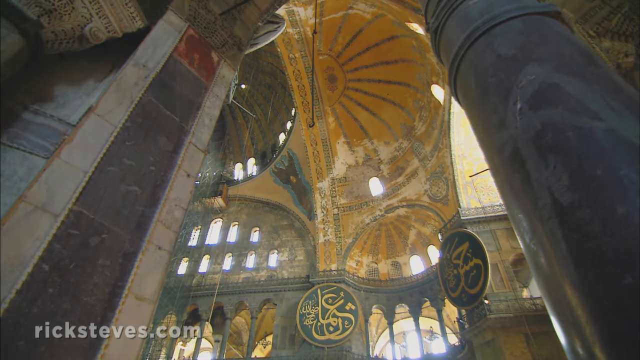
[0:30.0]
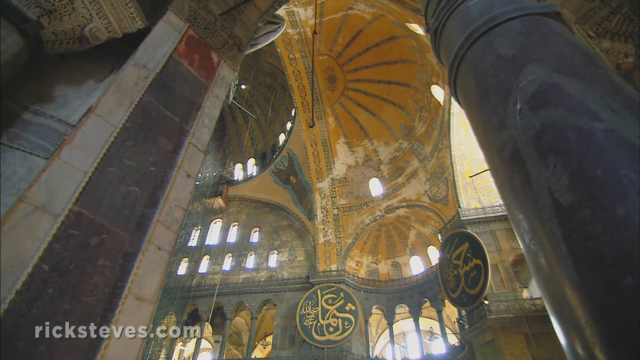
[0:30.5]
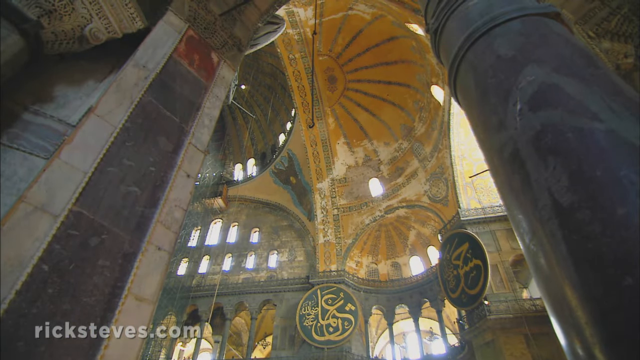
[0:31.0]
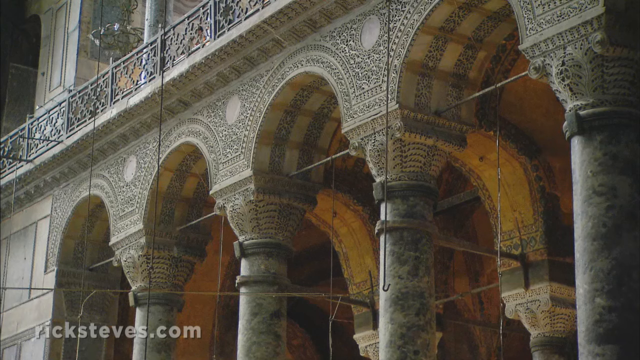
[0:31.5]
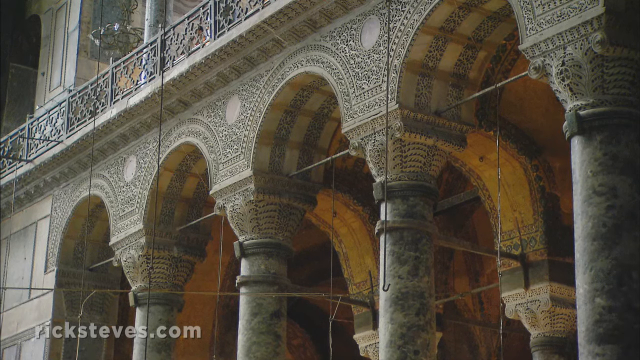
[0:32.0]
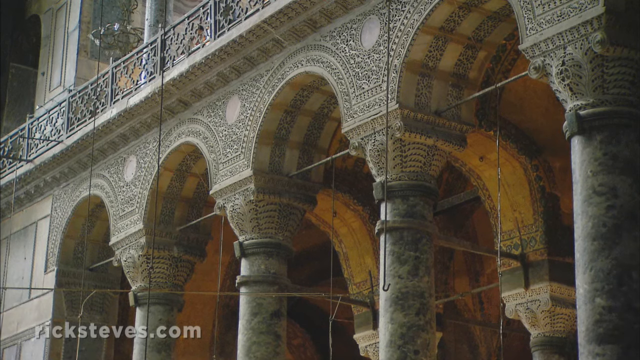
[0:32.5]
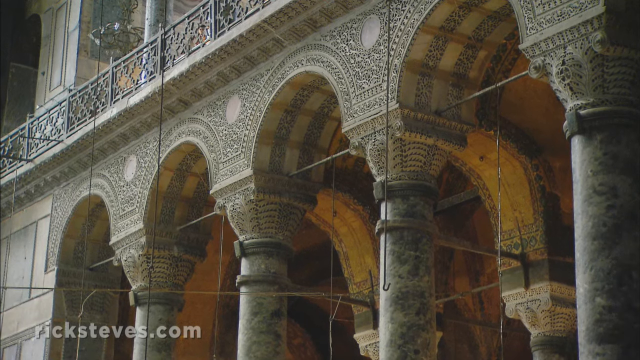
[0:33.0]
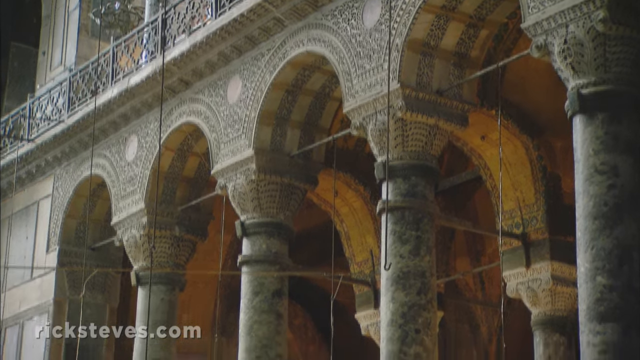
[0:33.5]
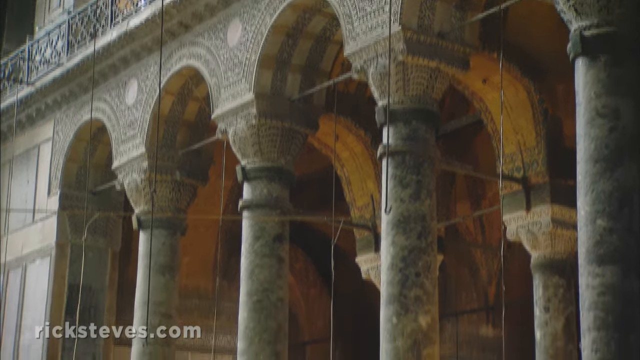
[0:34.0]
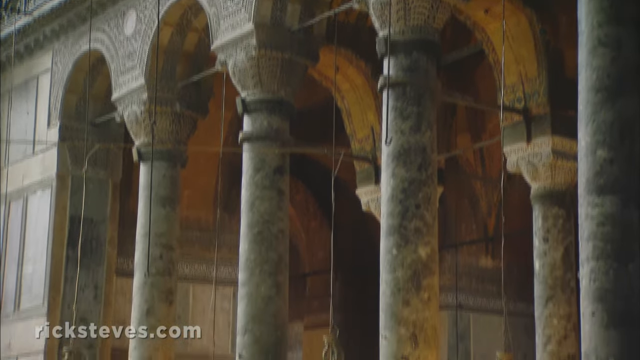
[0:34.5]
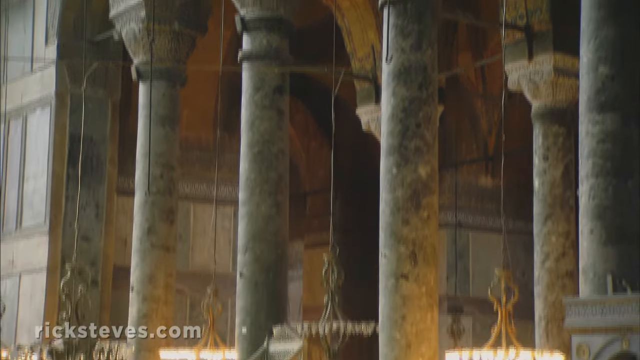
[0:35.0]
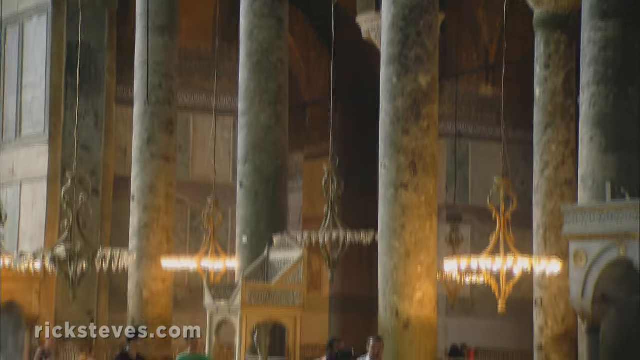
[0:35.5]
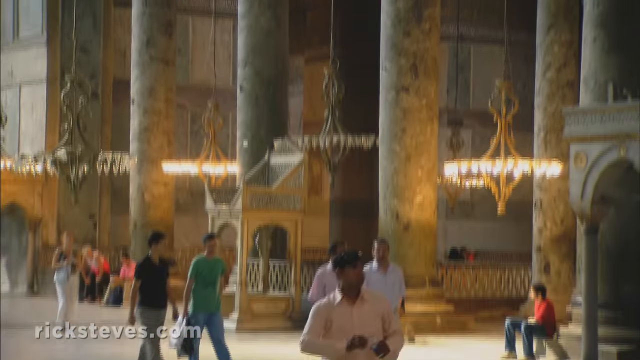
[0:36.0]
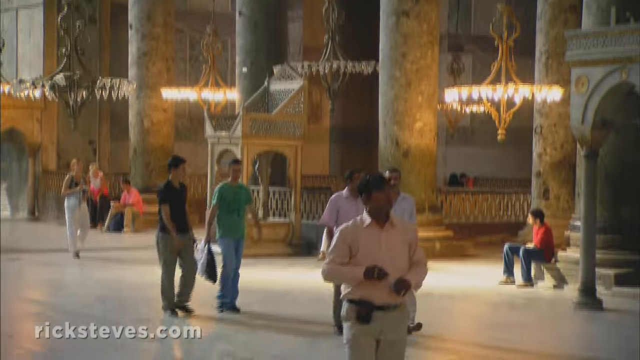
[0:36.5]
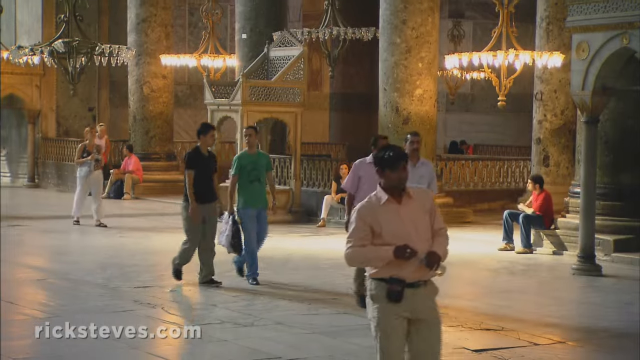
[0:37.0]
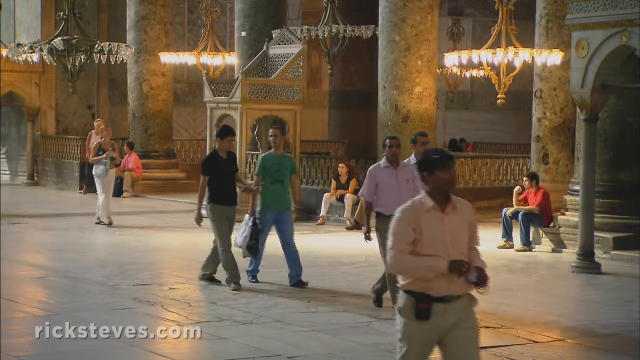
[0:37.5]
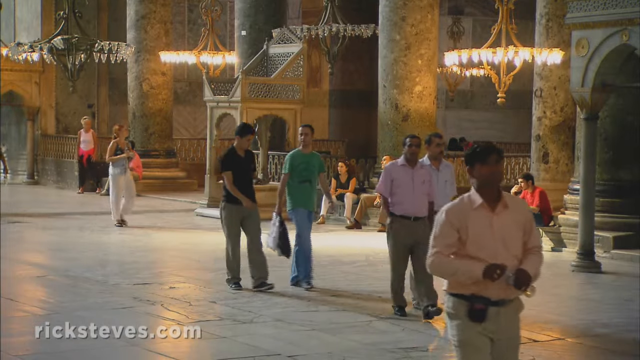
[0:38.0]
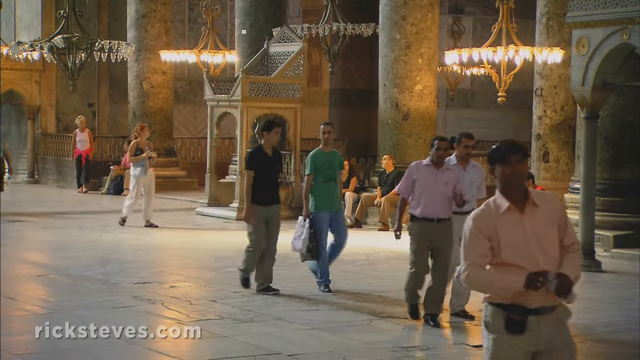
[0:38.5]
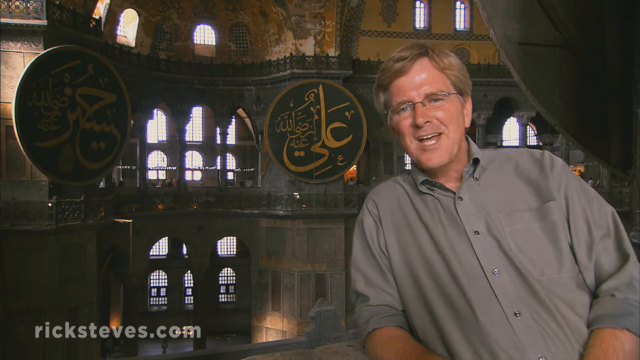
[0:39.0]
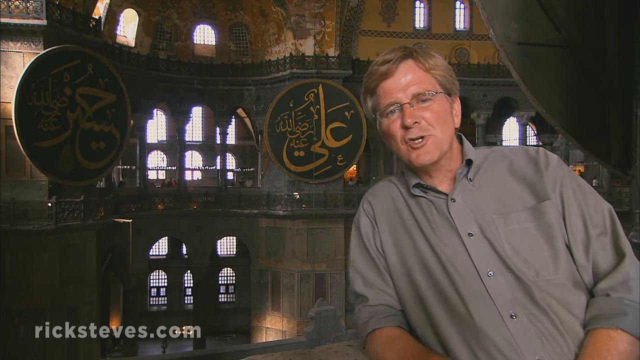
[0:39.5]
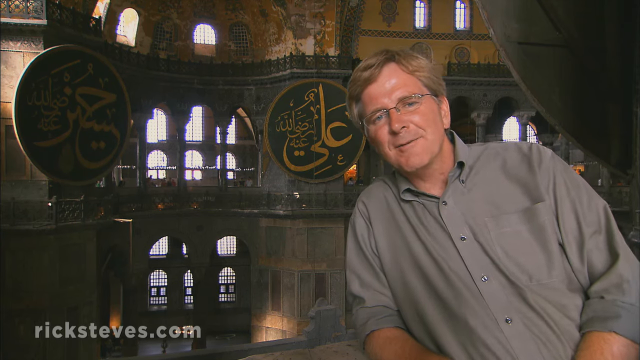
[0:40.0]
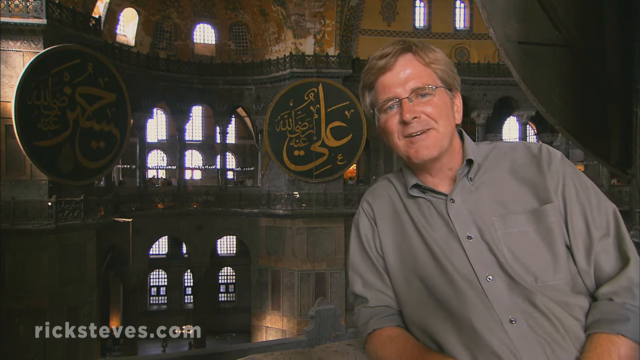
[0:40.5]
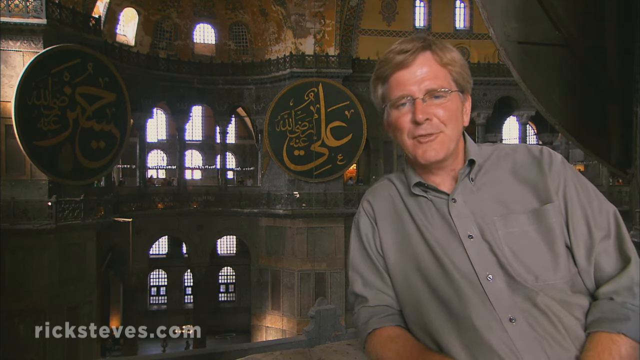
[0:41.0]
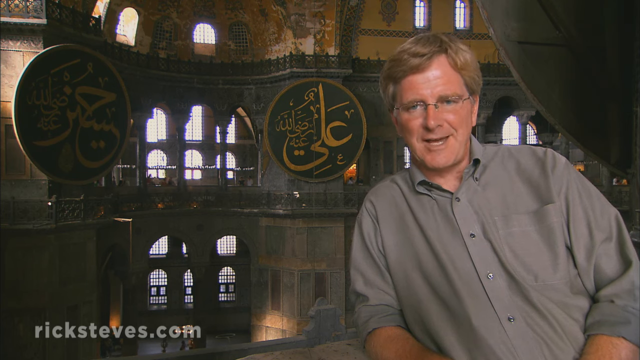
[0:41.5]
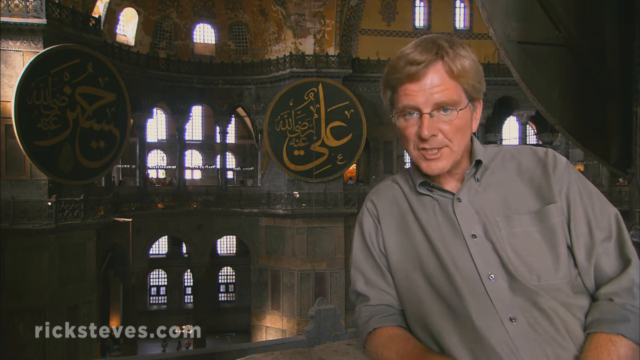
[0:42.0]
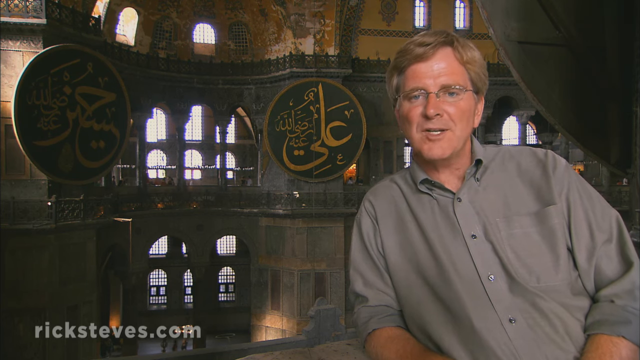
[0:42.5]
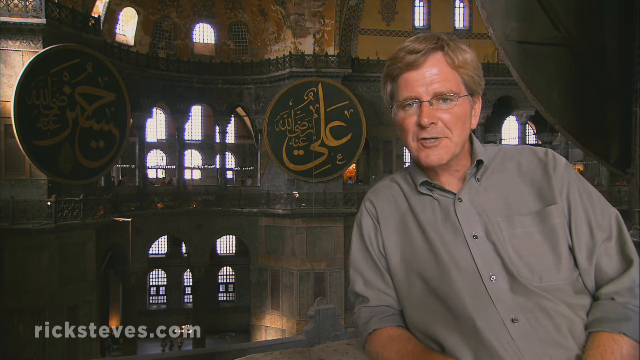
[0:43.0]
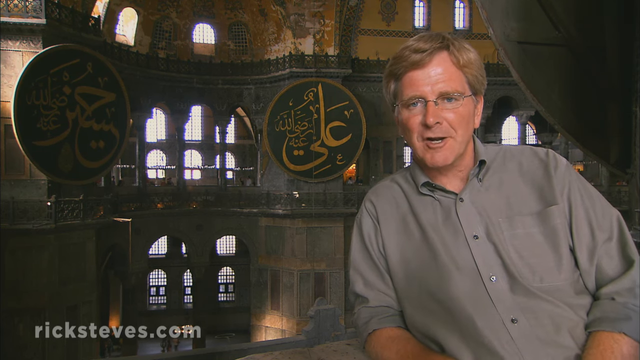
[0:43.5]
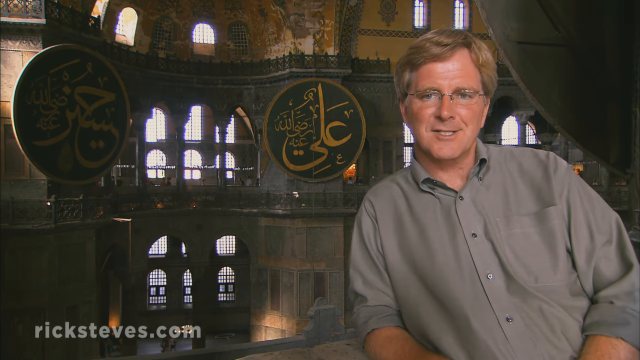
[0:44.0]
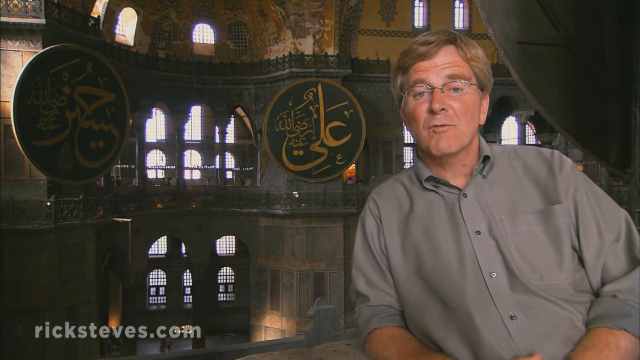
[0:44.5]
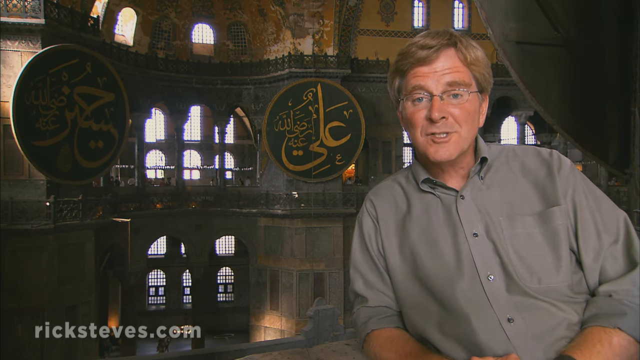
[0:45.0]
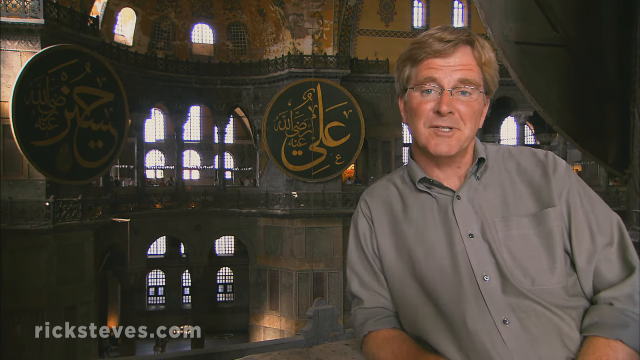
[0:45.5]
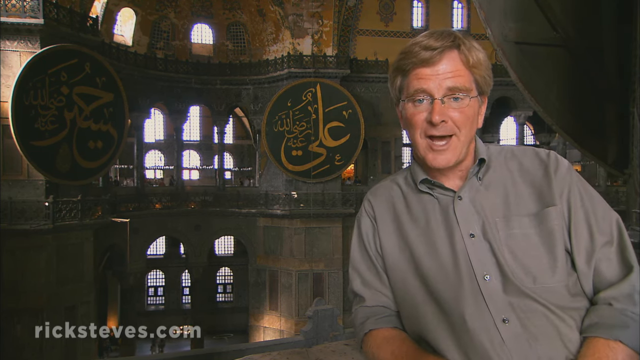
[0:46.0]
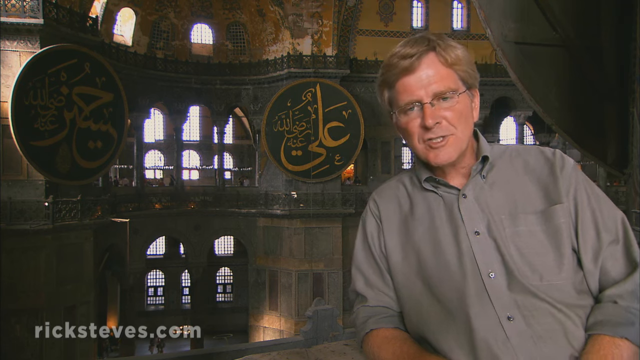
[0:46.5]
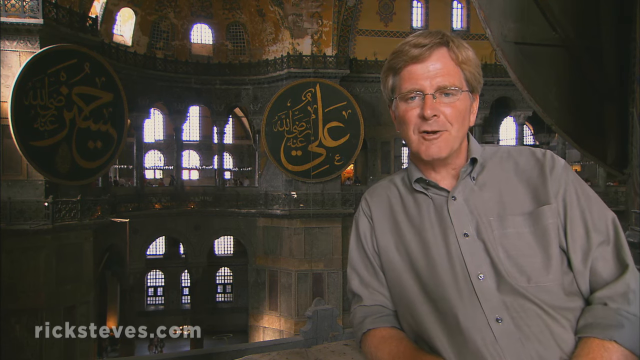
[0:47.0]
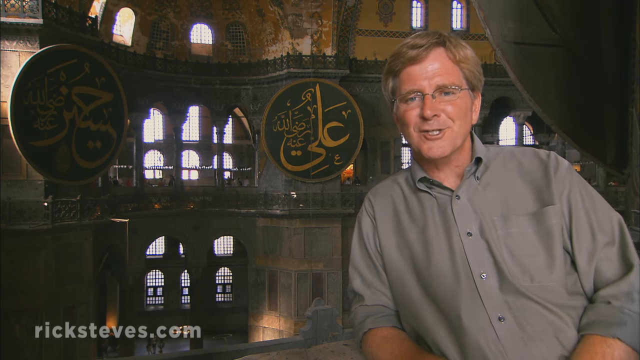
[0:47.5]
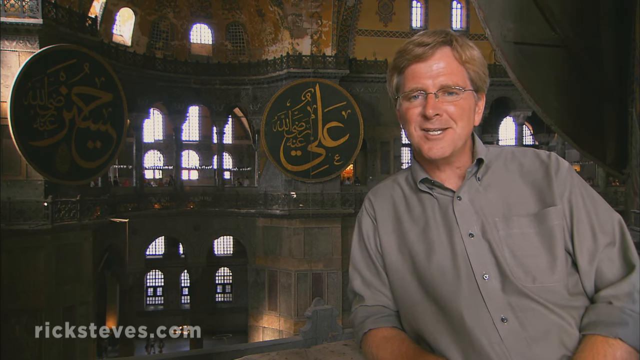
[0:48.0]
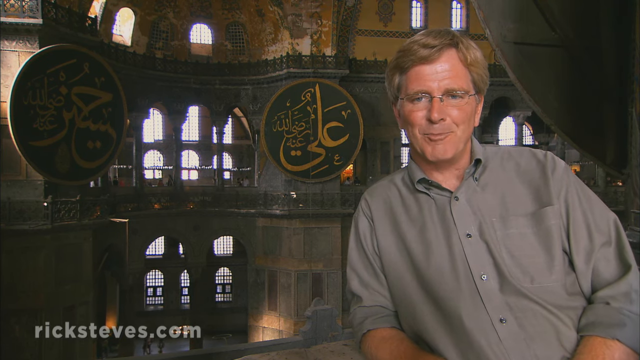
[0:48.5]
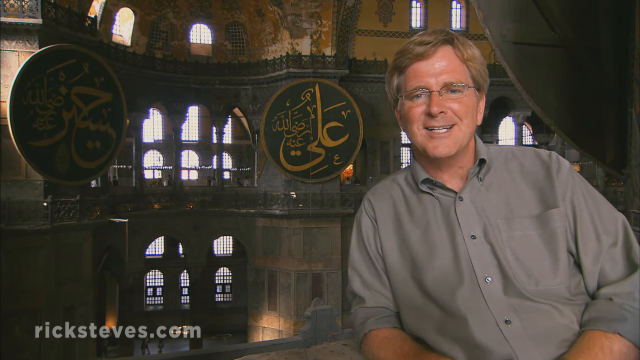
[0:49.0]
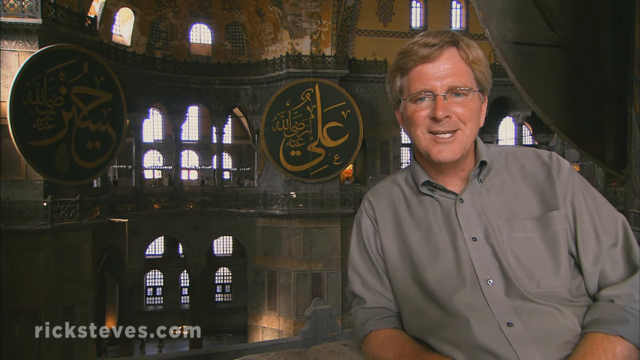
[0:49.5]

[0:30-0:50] Inside the building, the top is all red and looks crumbling and rotten, yet the circular part above has intricate designs with many different patterns. The camera pans across the pillars, which have many layers; they look like they are made of cobblestone or jade and are gray, and there is space to sit at the ends of the pillars. Many tourists walk around. Rick Steves then appears, wearing a gray collared shirt and glasses. He is apparently on the top or middle level of the building, standing right behind two big circular Arabic plates, introducing the place.